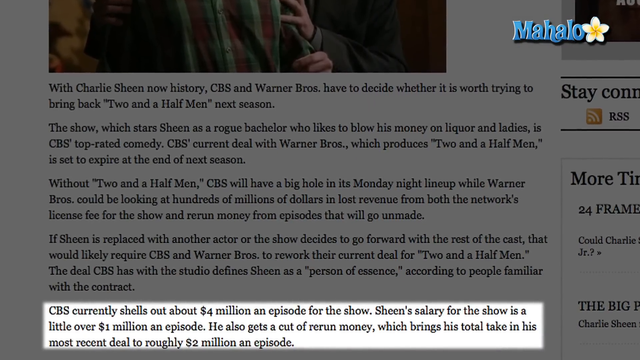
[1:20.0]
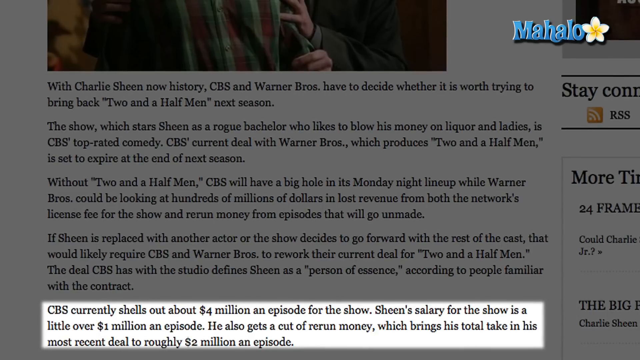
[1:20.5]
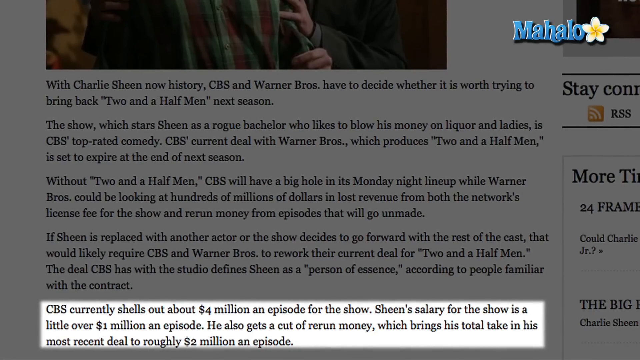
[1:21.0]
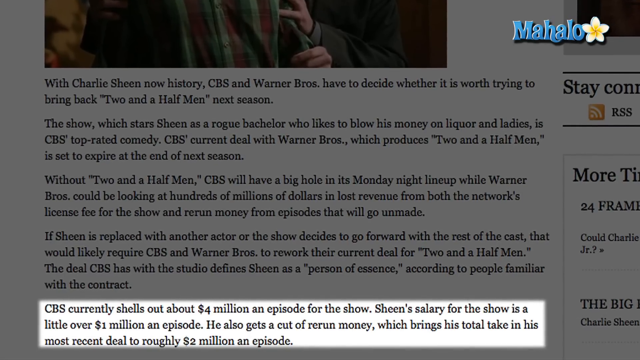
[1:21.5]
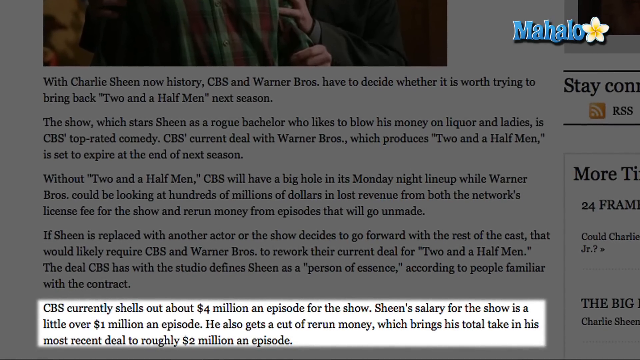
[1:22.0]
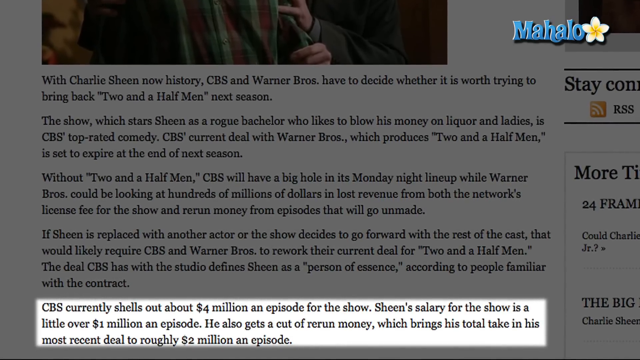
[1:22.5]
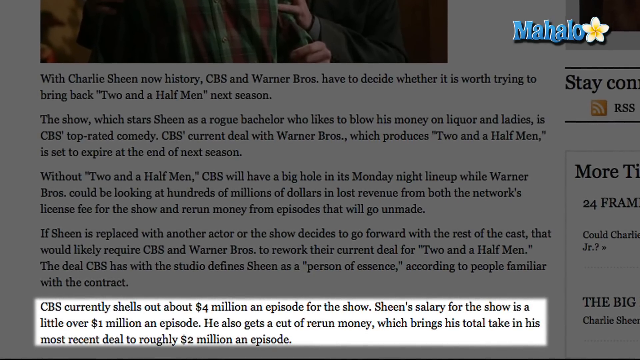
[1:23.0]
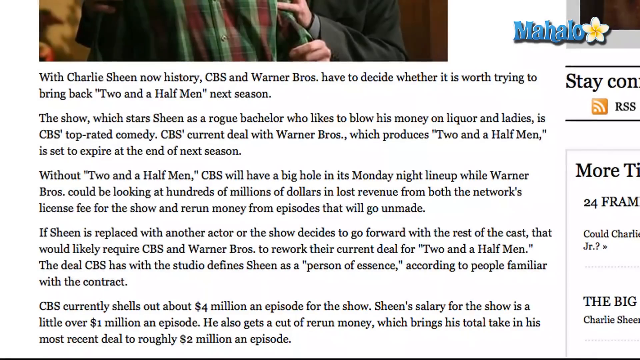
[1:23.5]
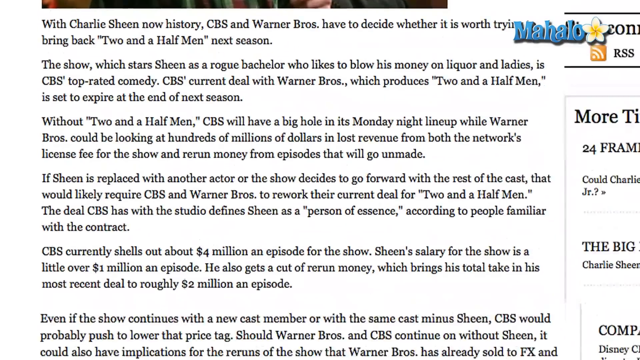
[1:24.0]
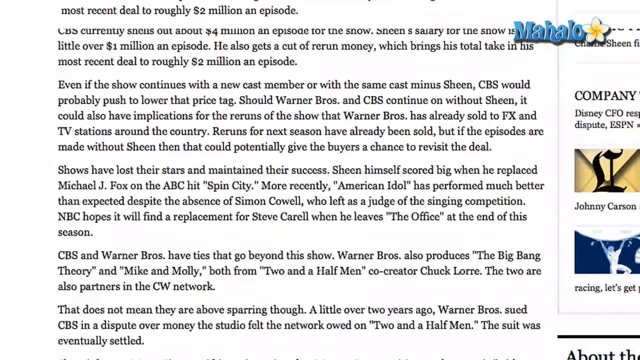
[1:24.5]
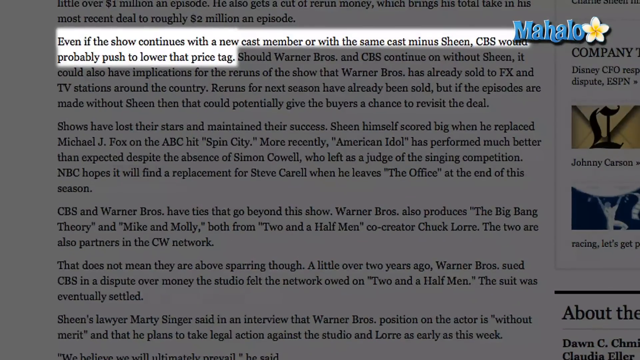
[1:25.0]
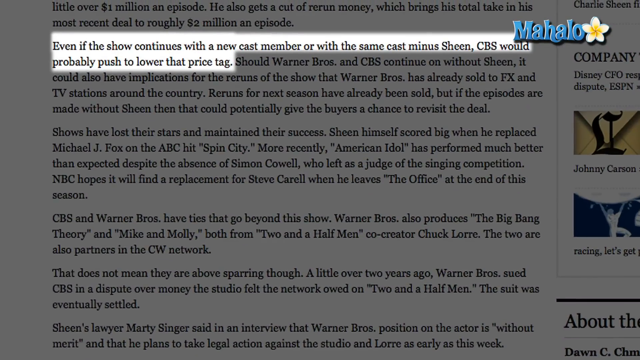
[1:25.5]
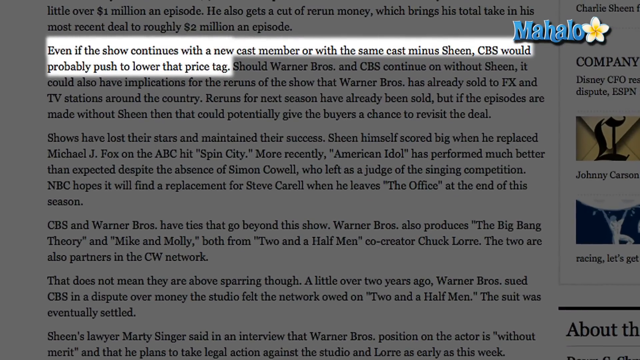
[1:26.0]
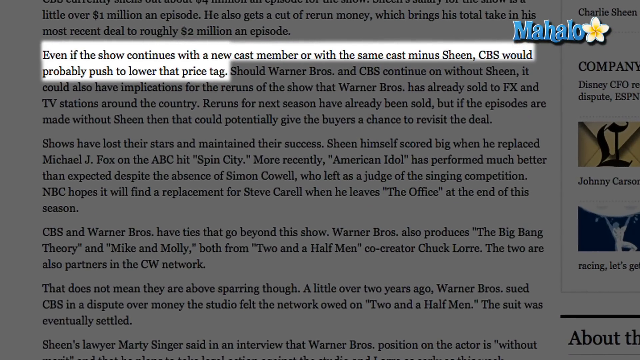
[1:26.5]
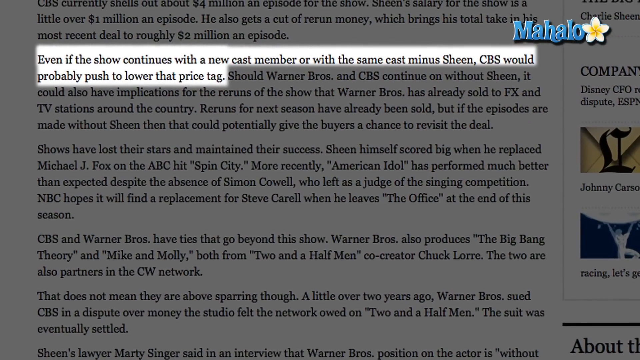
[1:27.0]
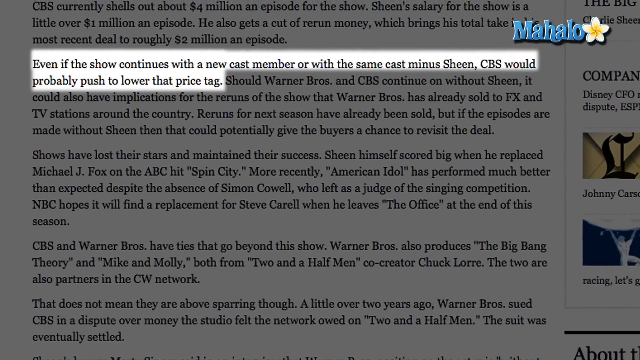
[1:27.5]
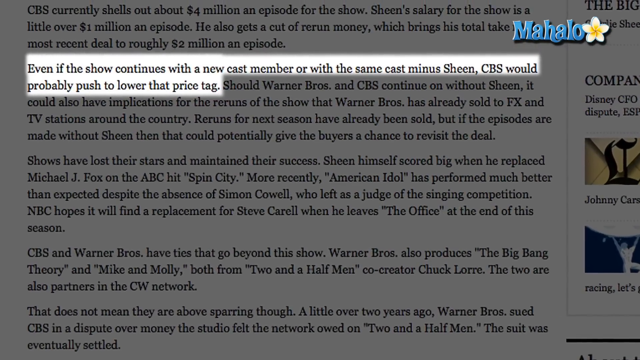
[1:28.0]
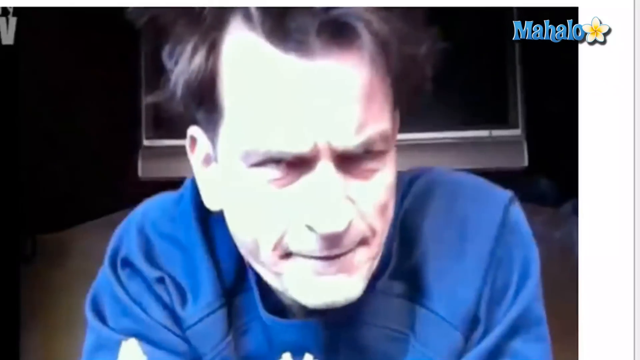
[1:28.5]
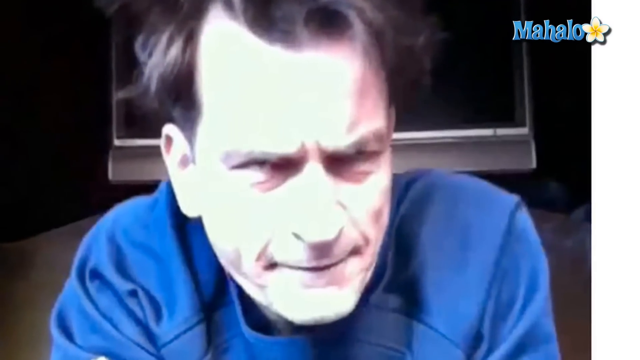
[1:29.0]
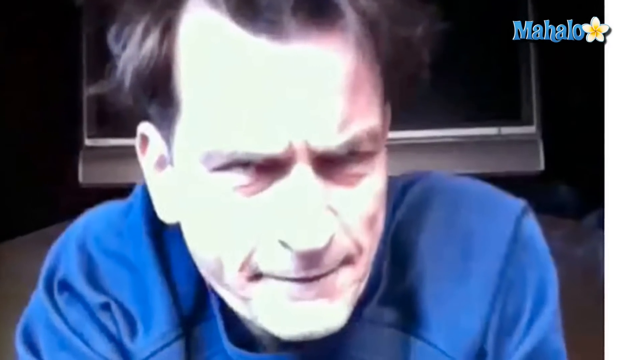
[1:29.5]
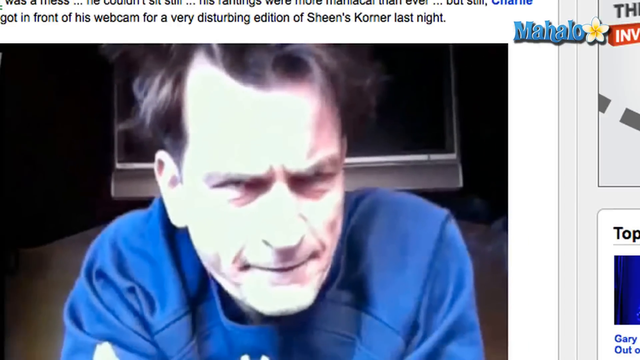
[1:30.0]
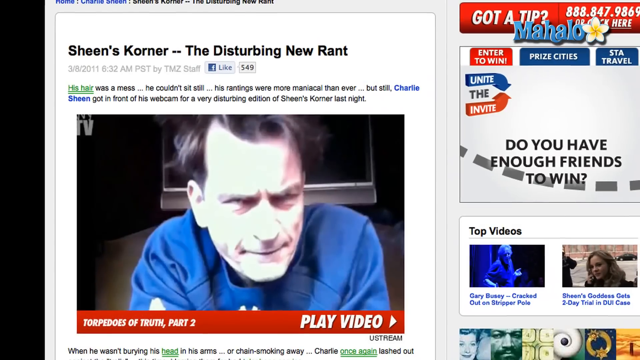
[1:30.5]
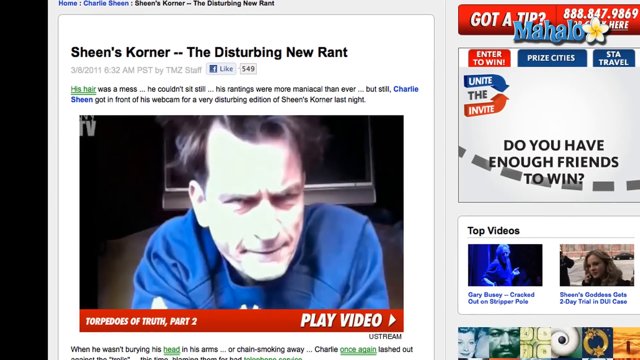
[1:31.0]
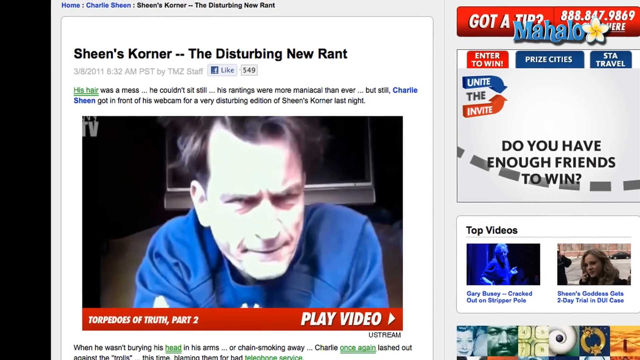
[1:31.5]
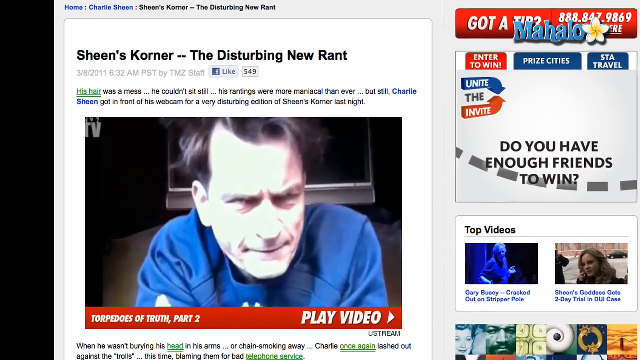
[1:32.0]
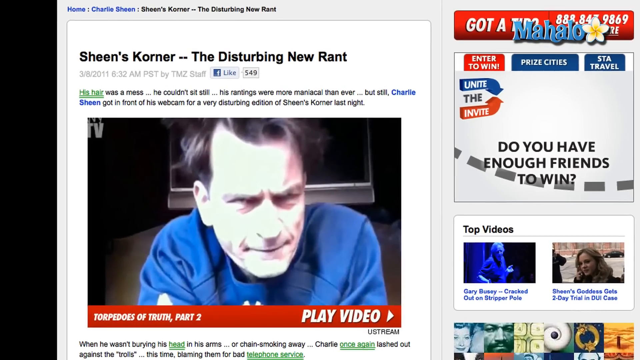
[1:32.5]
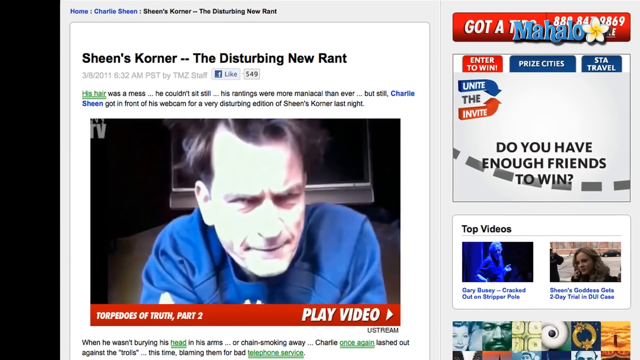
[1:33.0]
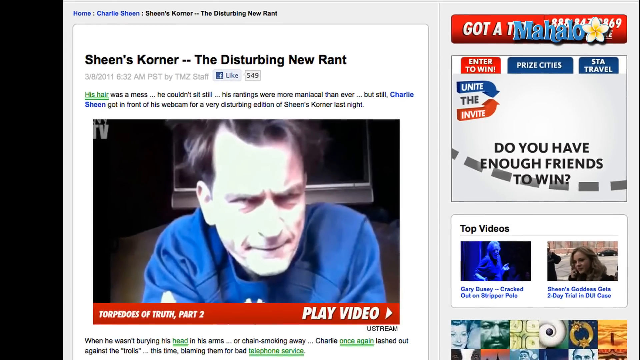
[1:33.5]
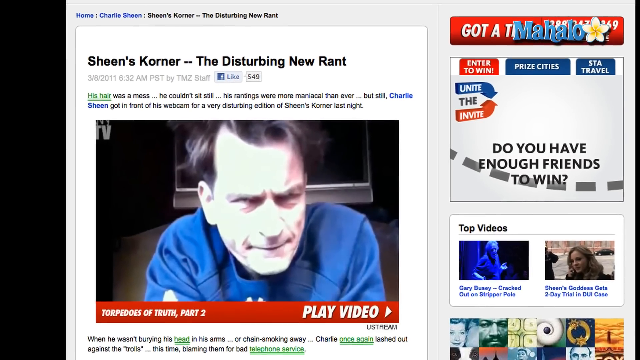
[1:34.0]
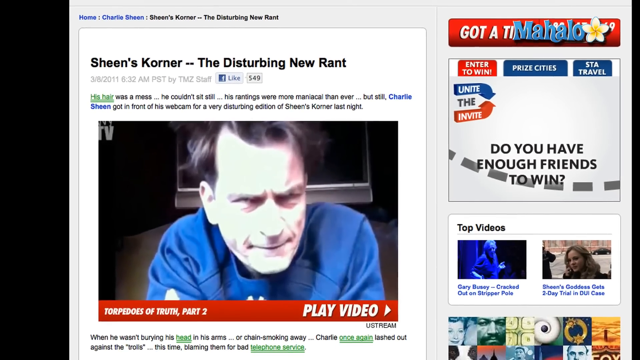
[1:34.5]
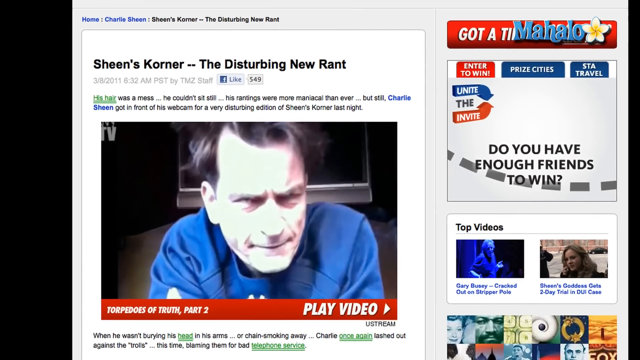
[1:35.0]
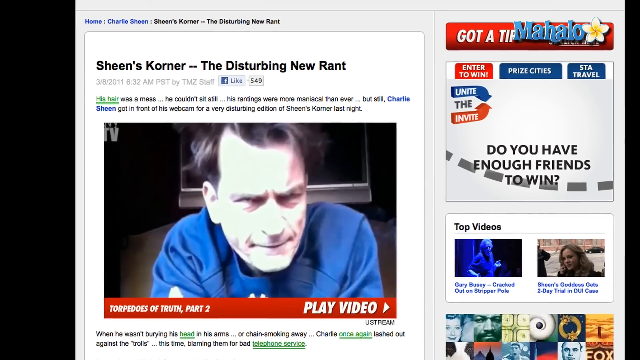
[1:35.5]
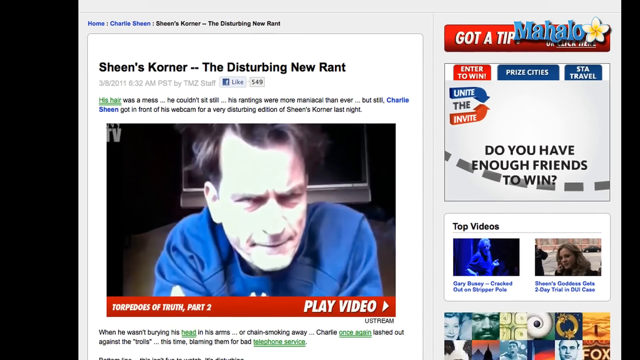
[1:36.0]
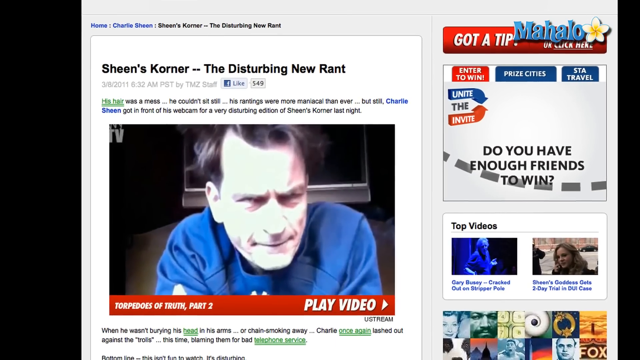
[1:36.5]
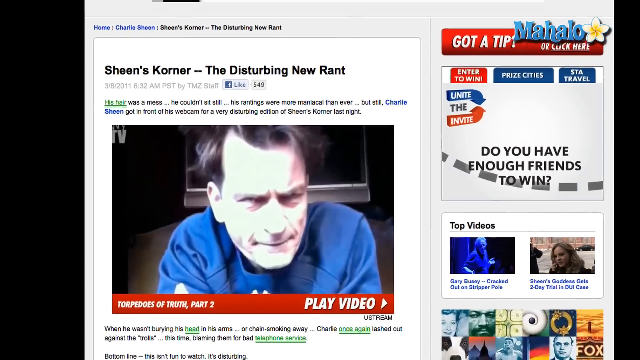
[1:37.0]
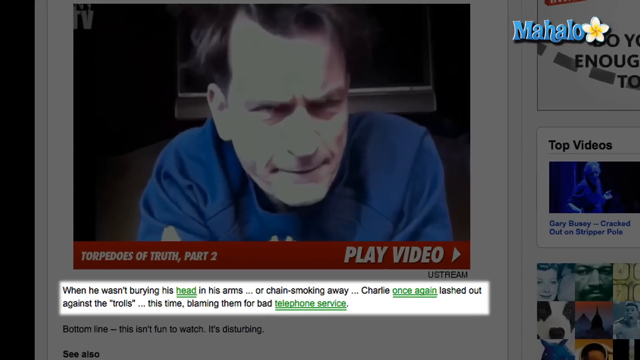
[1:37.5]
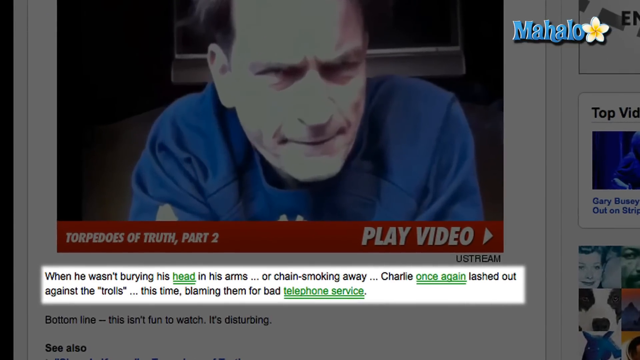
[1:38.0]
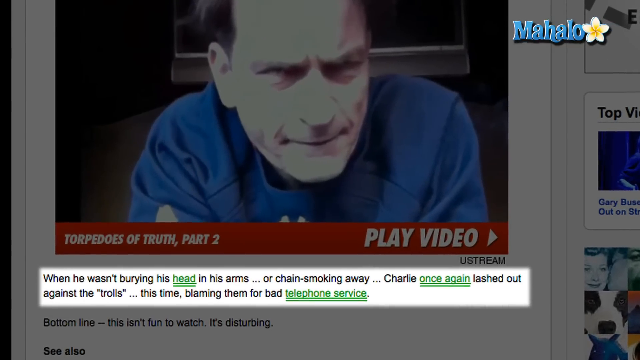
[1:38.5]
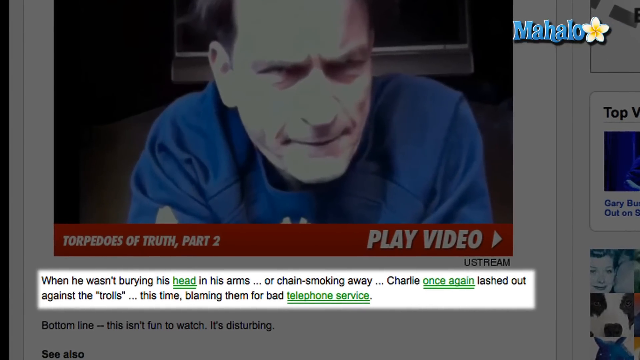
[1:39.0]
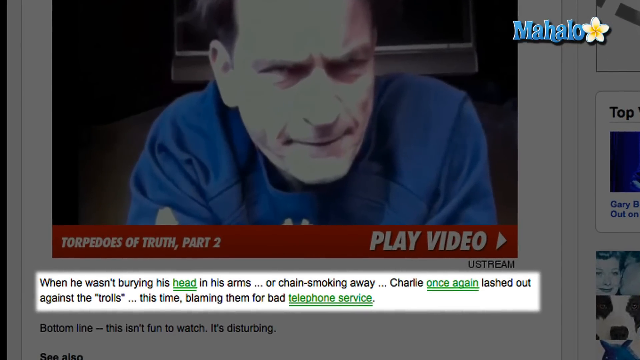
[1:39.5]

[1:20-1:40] The report discusses whether CBS and Warner Brothers will try to bring back Two and a Half Men next season, the show's deal between the two companies, and Sheen's salary.